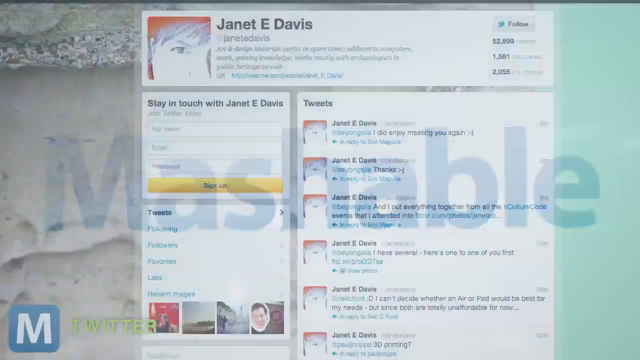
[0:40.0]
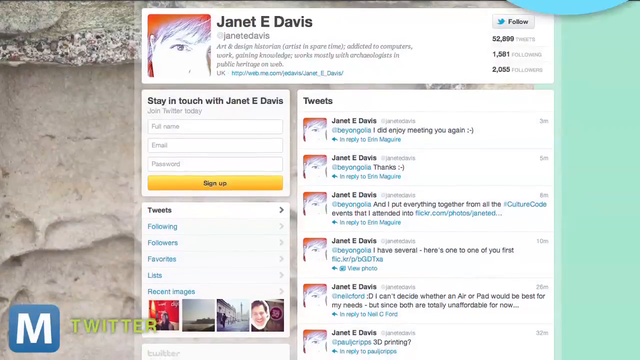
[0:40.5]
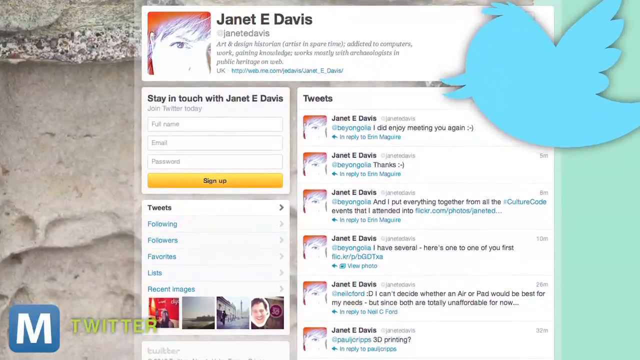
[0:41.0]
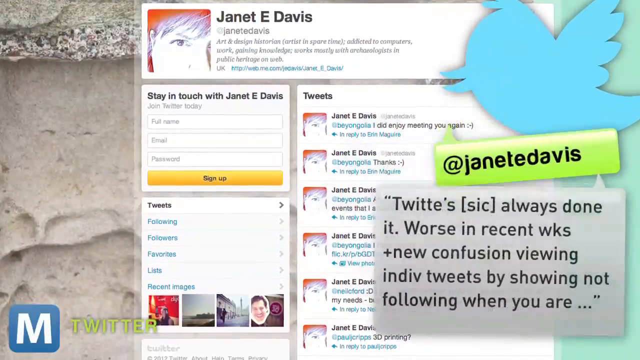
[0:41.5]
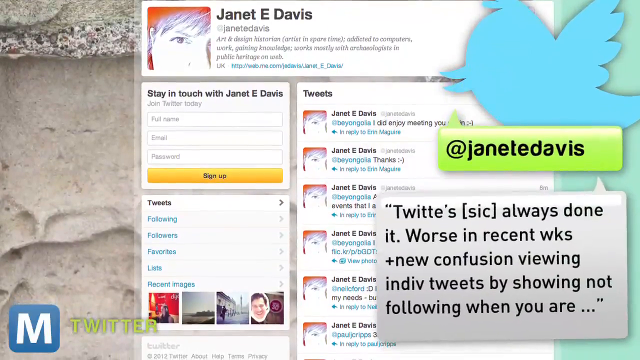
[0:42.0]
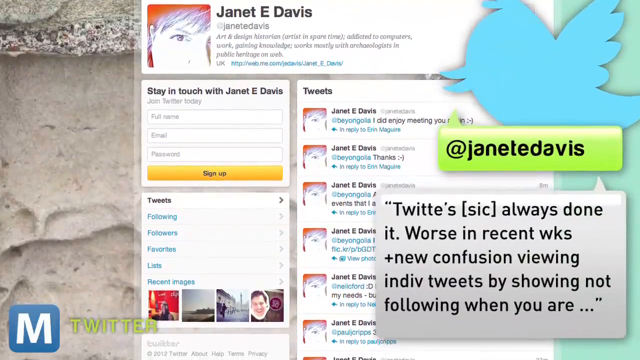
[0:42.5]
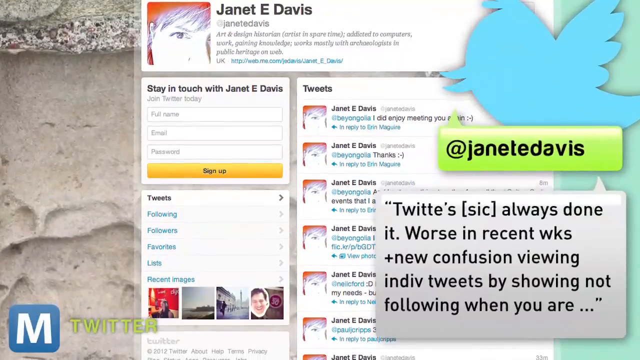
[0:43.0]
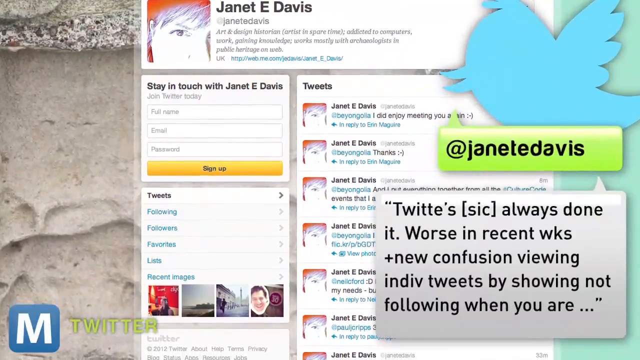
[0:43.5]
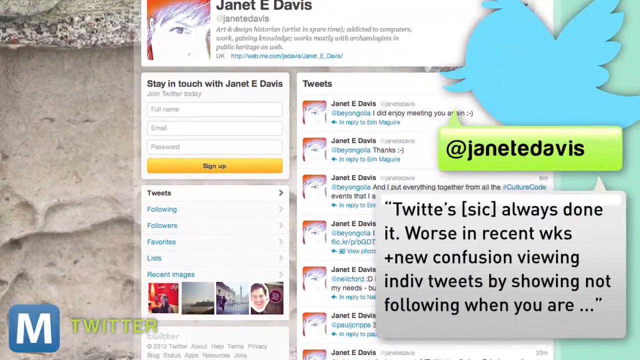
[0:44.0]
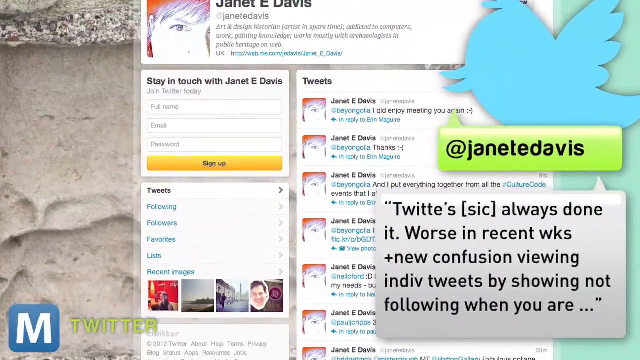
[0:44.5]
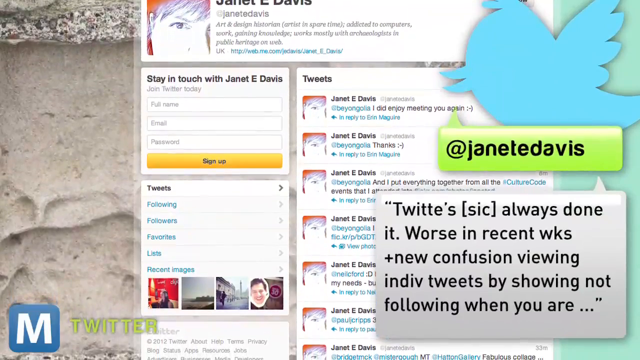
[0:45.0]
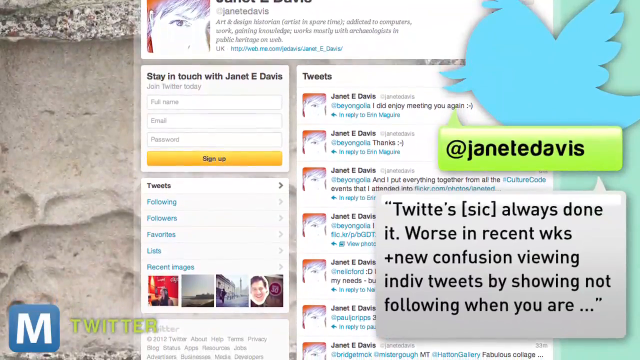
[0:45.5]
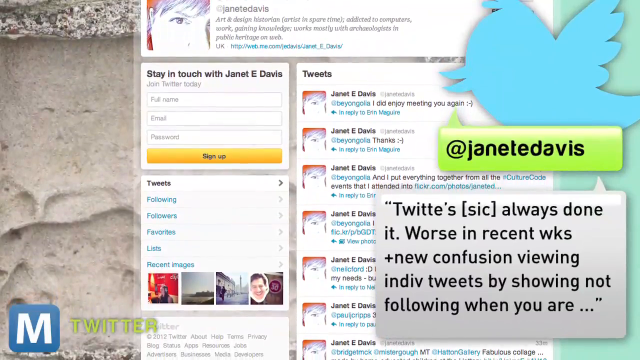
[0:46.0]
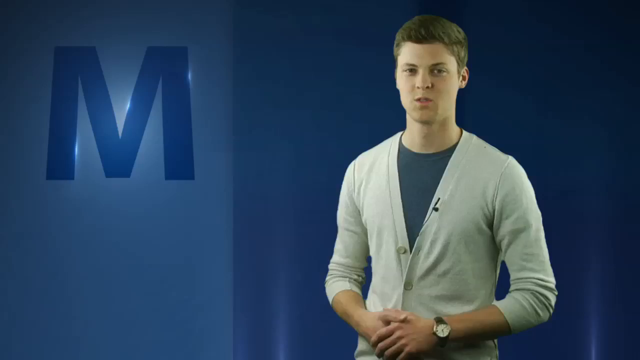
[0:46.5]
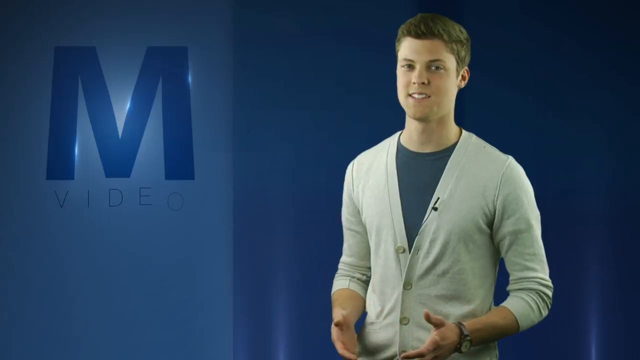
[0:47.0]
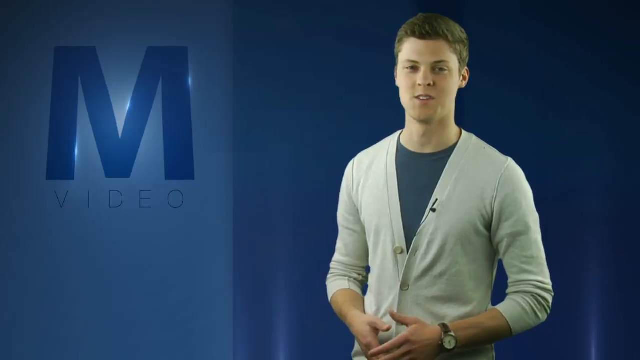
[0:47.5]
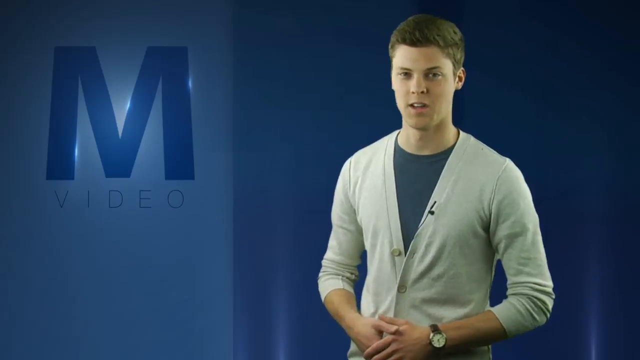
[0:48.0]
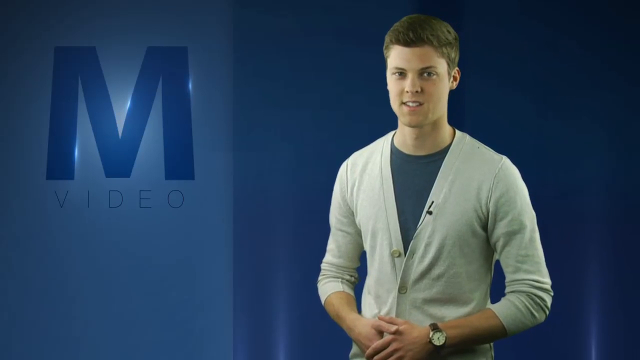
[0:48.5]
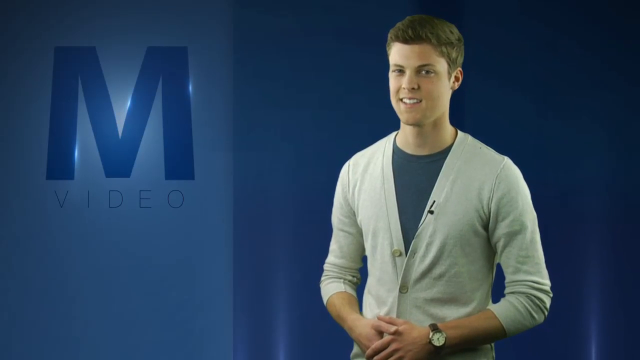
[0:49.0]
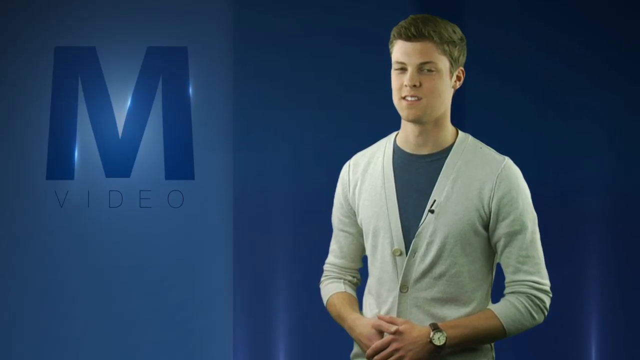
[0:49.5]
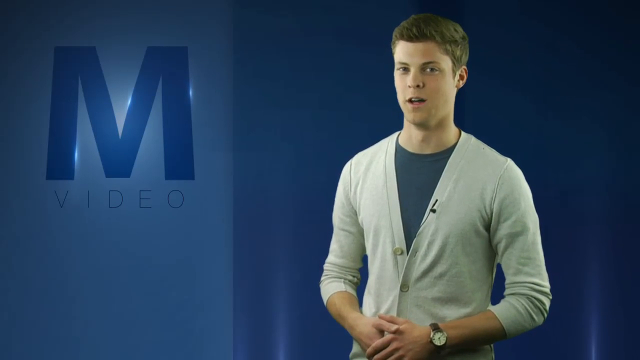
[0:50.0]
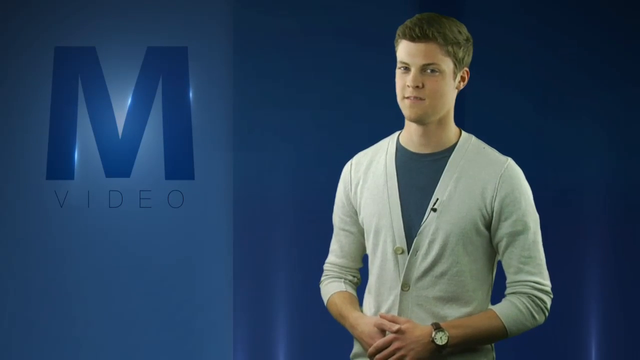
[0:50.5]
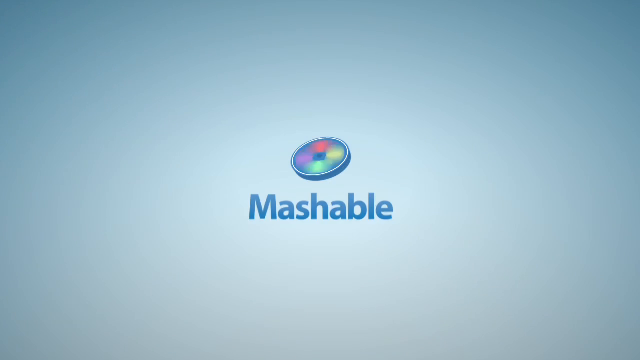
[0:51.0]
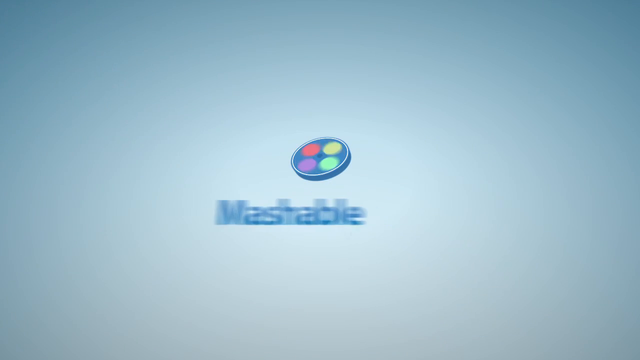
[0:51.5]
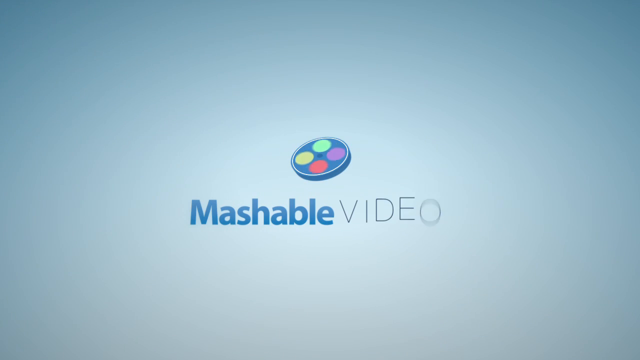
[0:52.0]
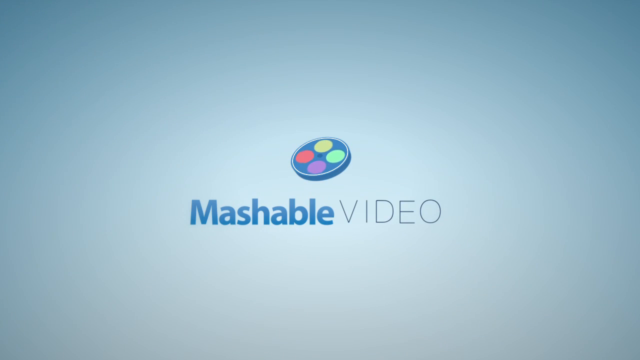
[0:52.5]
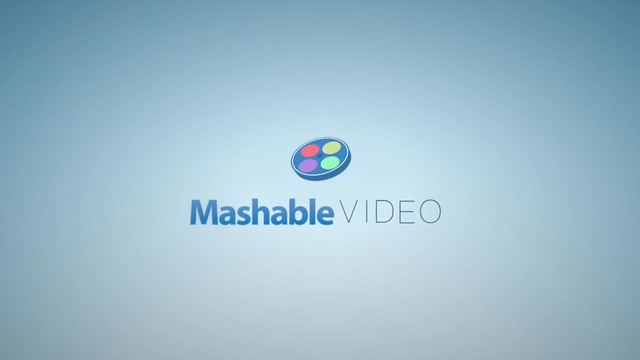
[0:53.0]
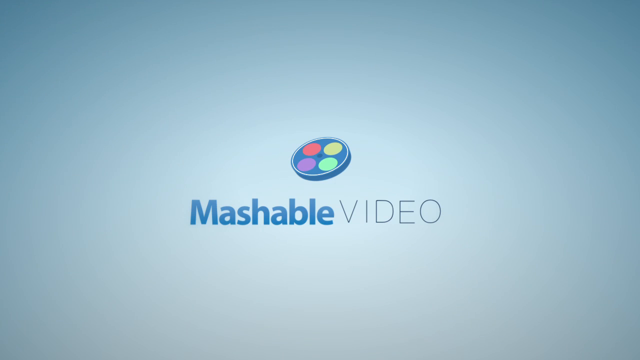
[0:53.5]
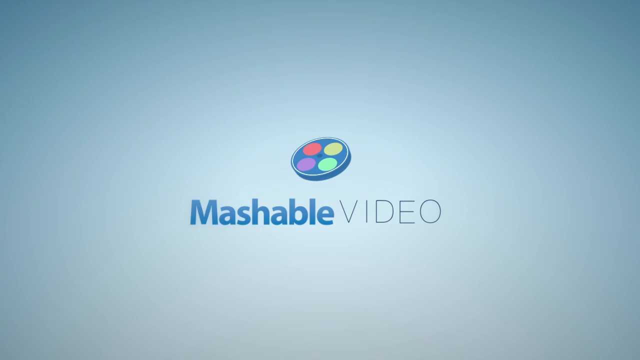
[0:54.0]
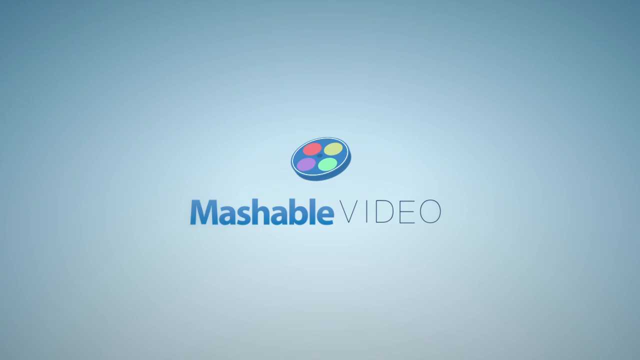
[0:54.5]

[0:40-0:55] The final part of the video sums up the topic: a bug on Twitter affecting how many people follow and unfollow others, and the technical team's quick solution.